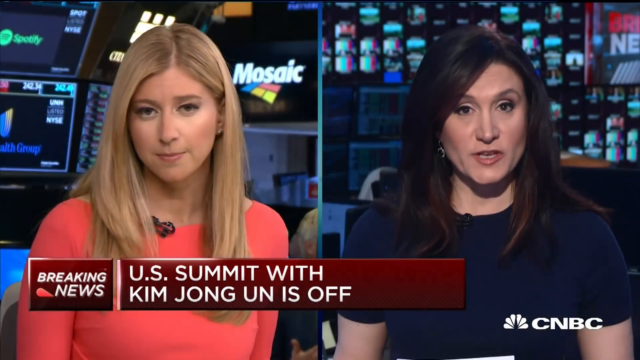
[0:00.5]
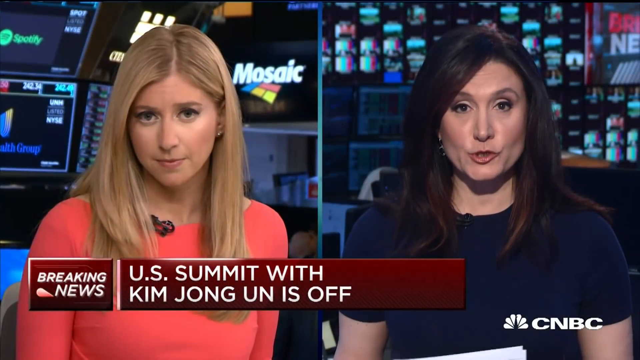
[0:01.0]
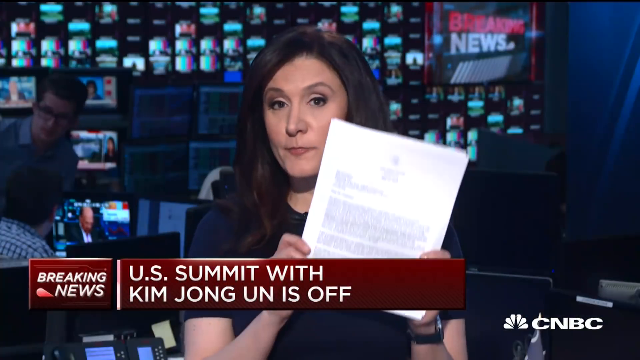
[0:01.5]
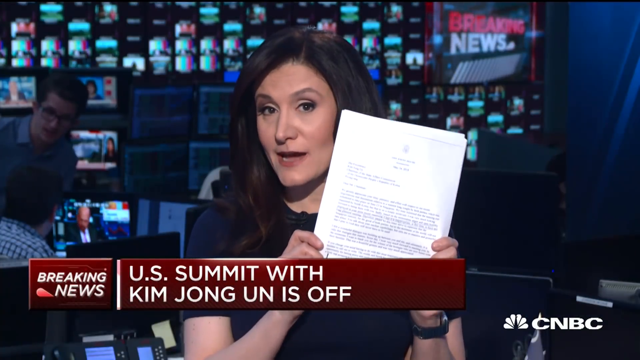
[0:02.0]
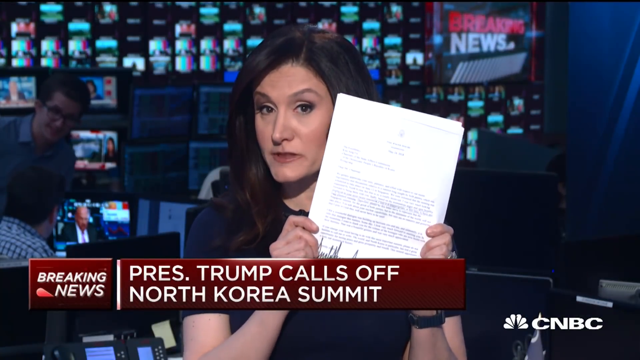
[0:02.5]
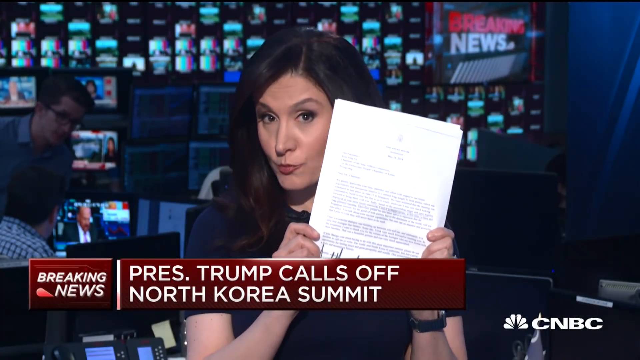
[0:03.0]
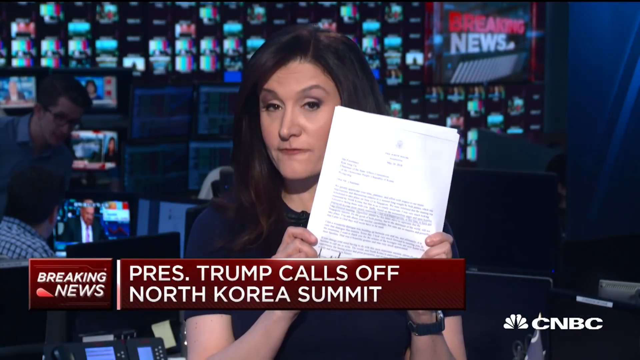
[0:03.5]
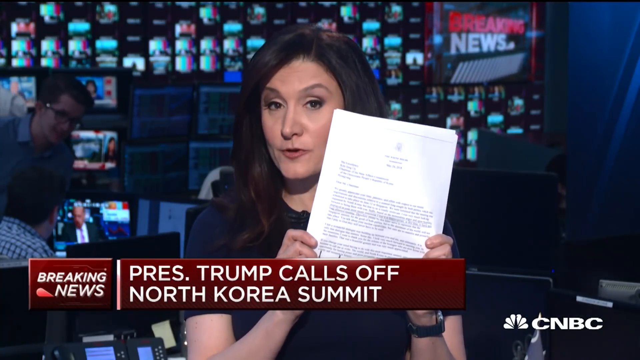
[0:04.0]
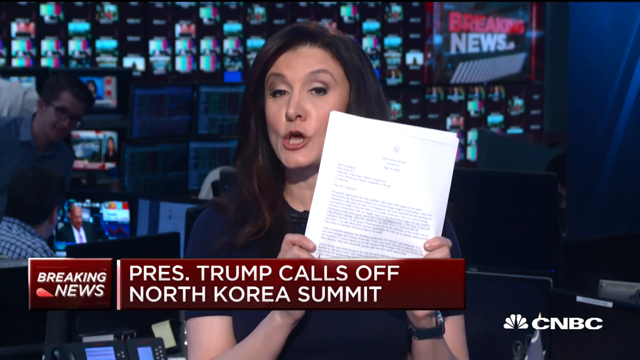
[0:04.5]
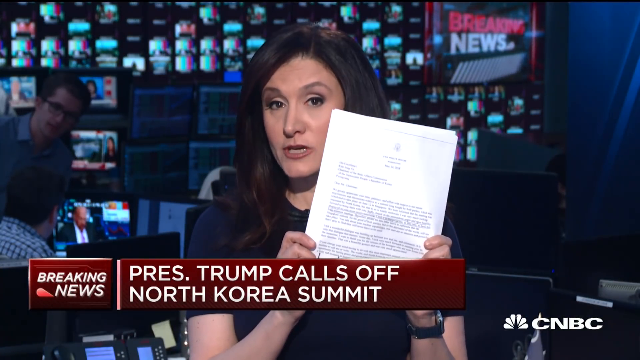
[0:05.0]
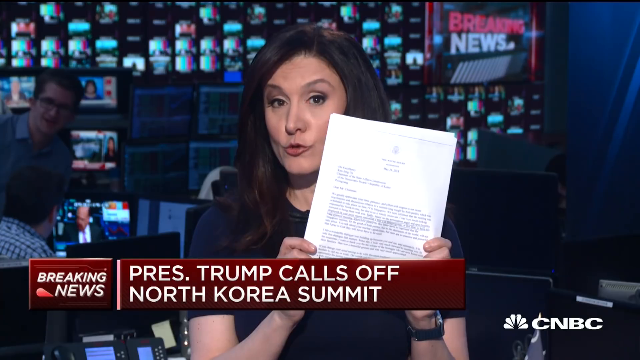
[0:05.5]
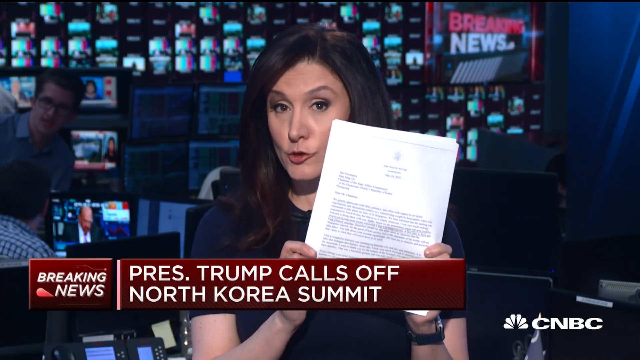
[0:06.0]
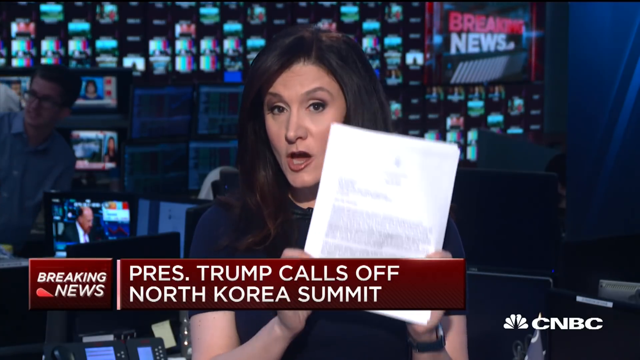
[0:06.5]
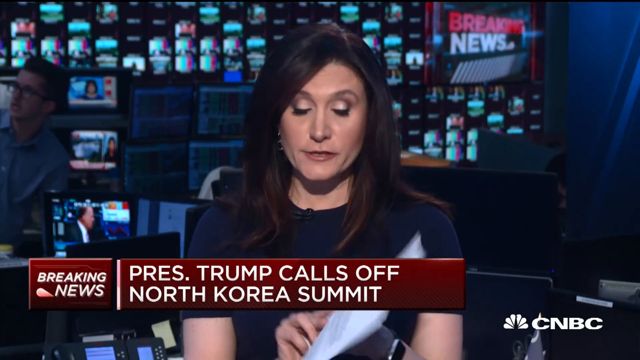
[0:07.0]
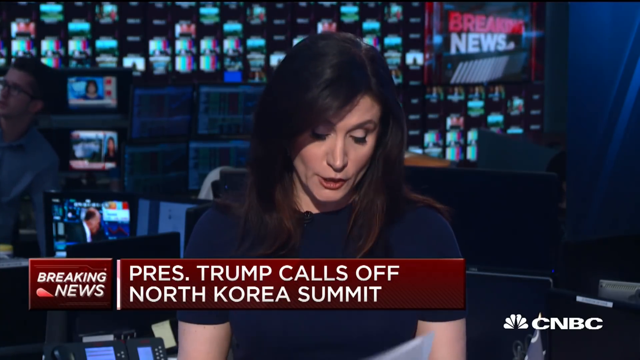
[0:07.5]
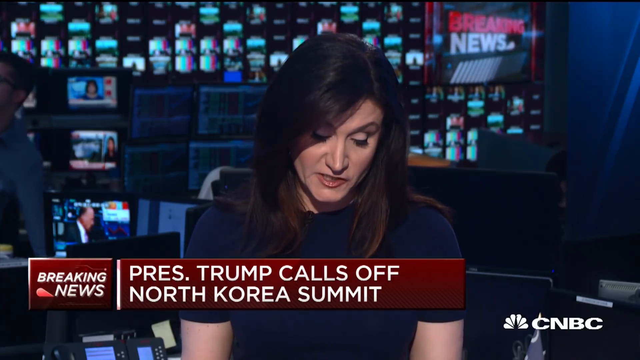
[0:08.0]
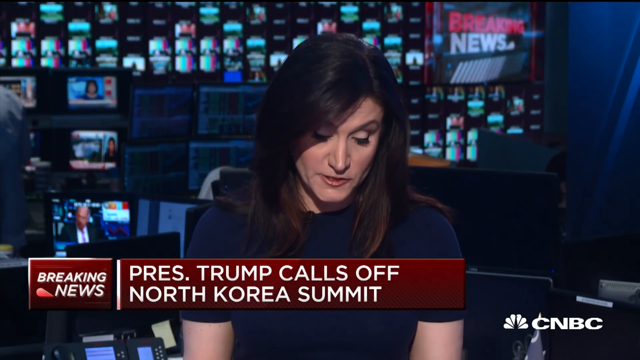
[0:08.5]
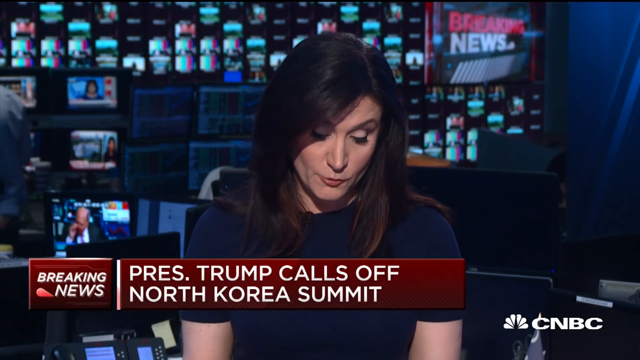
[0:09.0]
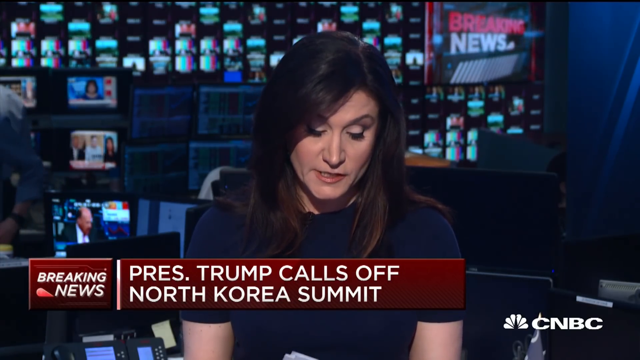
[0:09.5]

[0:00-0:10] A CNBC news segment opens in a studio with various screens behind the presenter, each showing different things at the same time. A female CNBC reporter with not-too-long hair, wearing a gown, holds up a paper, probably a statement from President Trump. Beside her, sitting with her, is another female journalist with long blonde hair in a pink dress, holding a microphone, who is listening to the woman on the right-hand side.